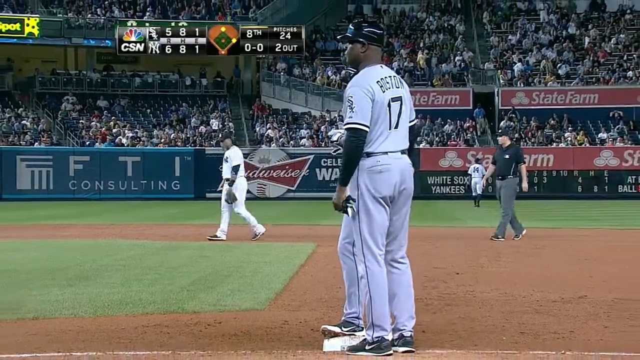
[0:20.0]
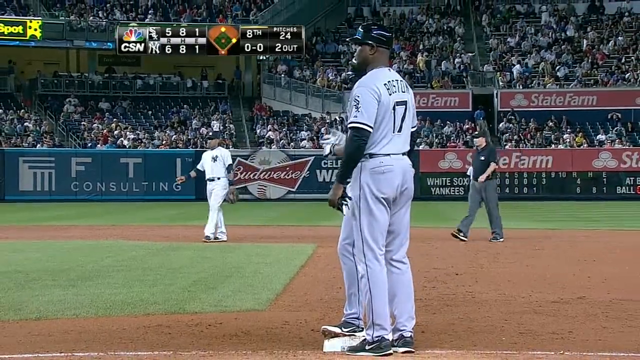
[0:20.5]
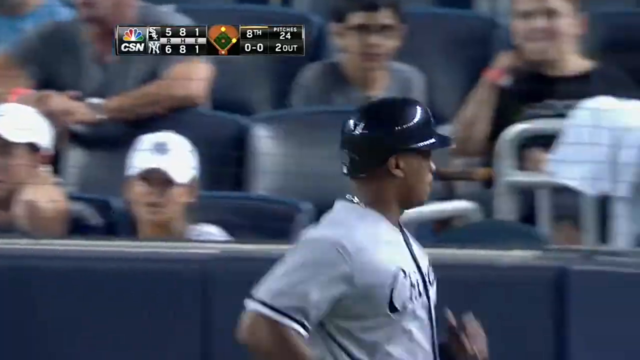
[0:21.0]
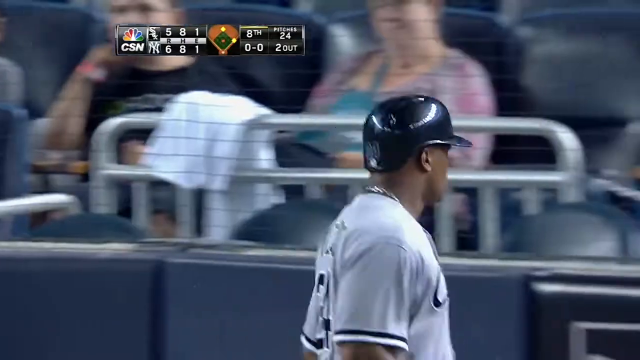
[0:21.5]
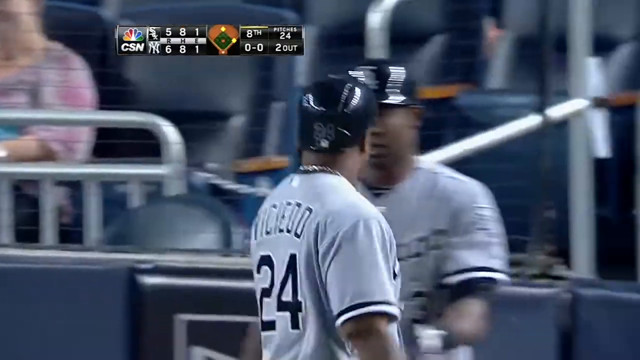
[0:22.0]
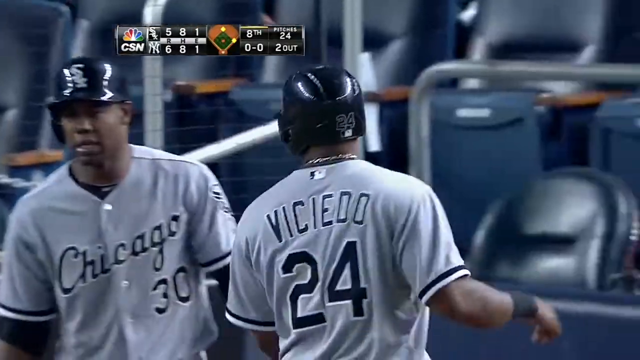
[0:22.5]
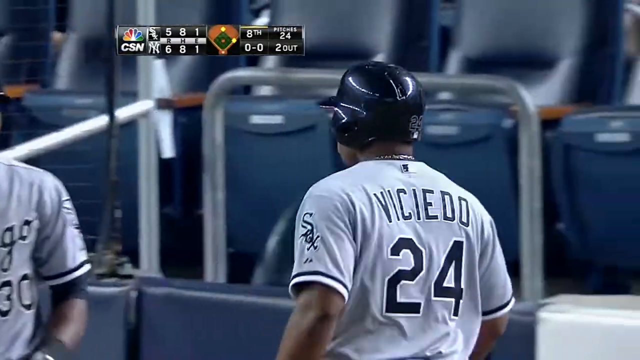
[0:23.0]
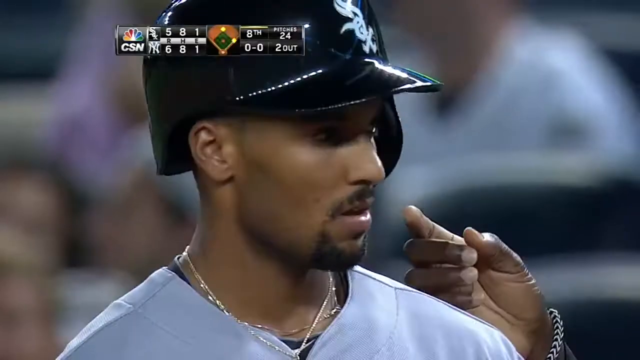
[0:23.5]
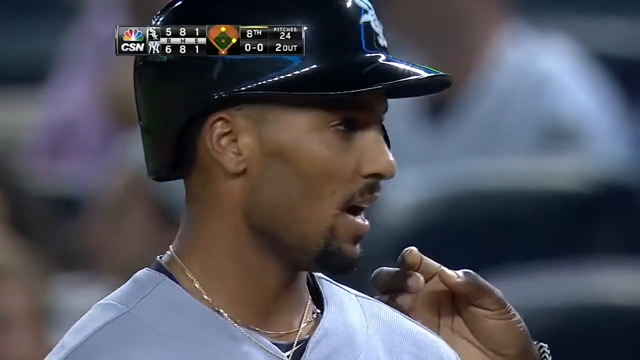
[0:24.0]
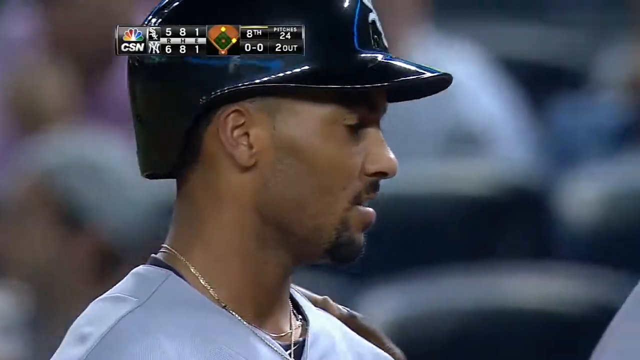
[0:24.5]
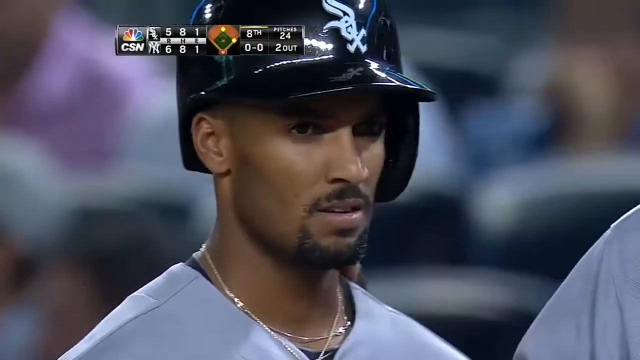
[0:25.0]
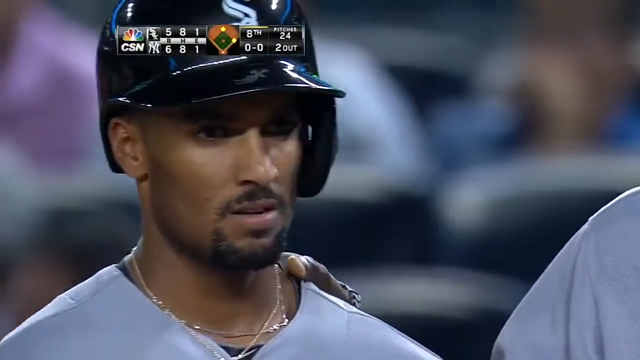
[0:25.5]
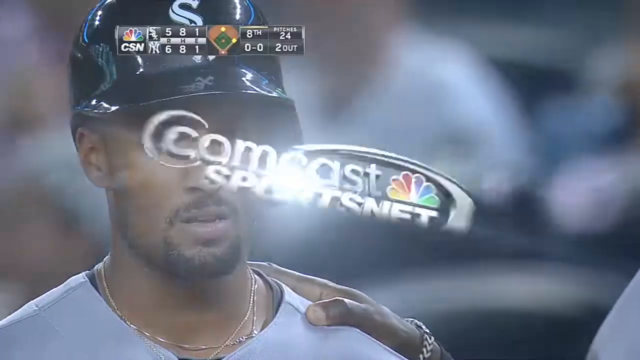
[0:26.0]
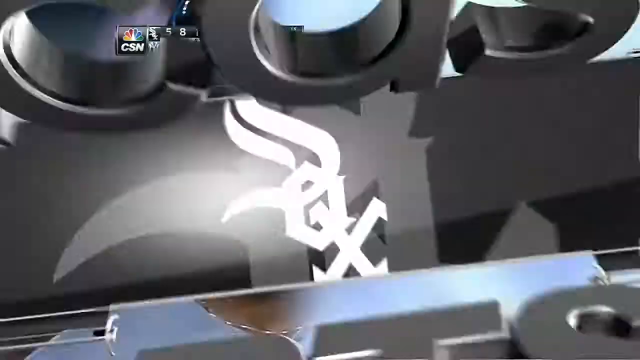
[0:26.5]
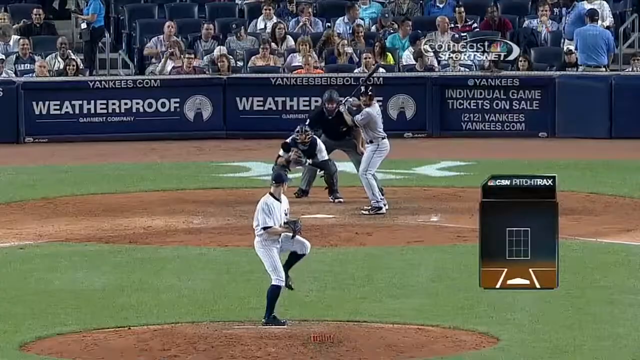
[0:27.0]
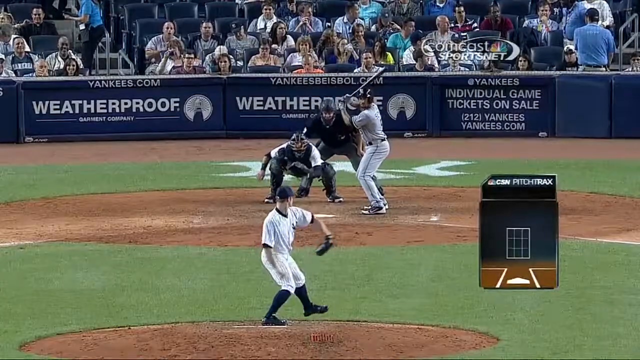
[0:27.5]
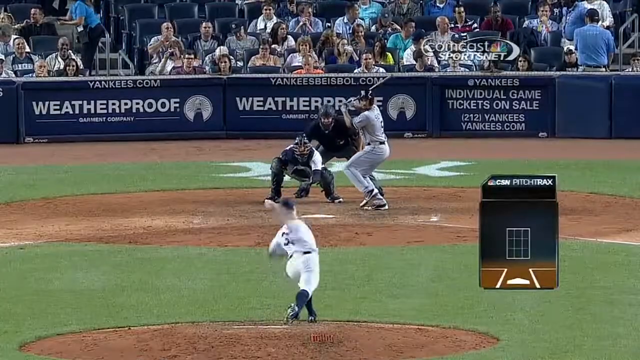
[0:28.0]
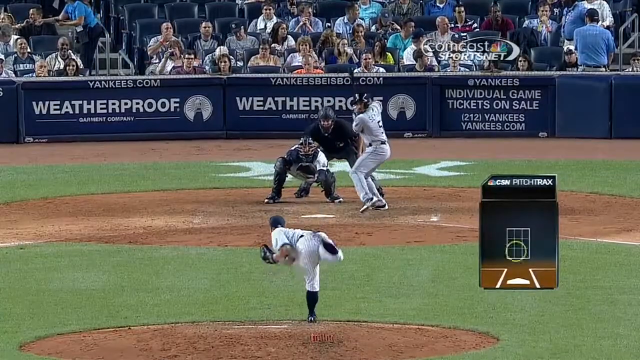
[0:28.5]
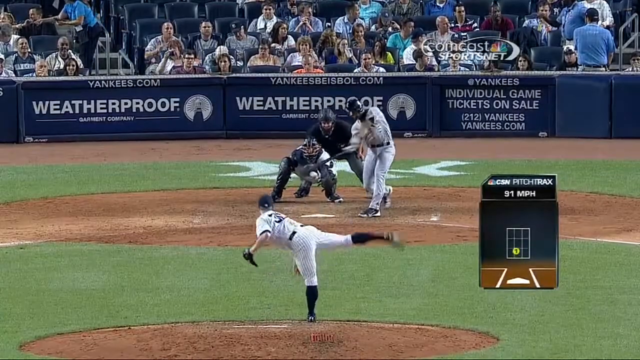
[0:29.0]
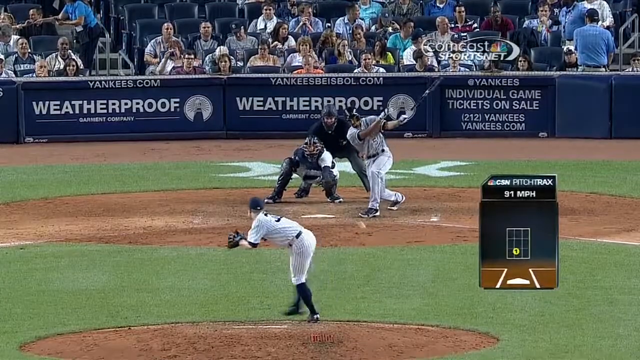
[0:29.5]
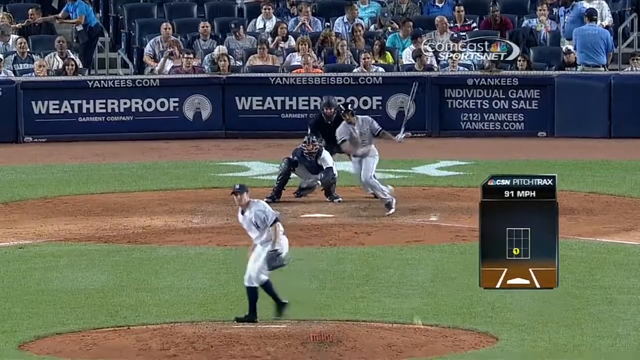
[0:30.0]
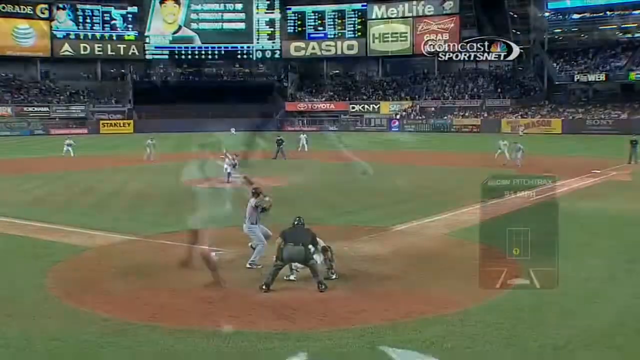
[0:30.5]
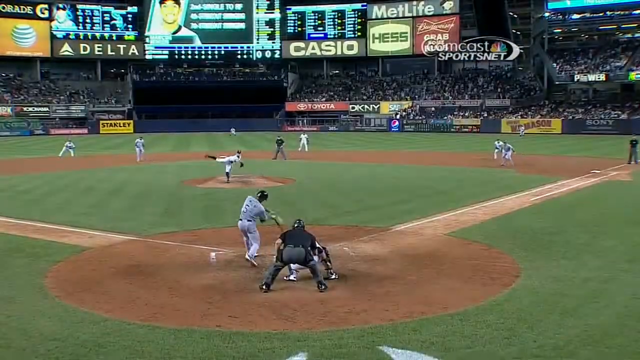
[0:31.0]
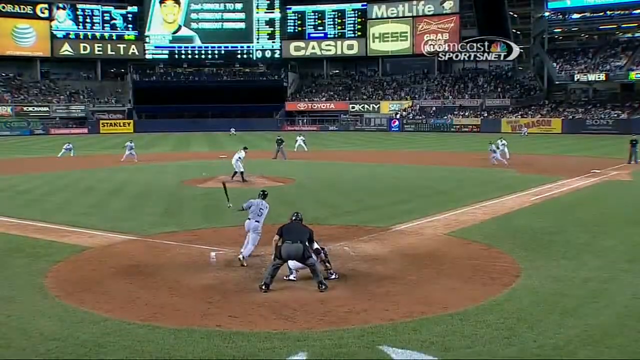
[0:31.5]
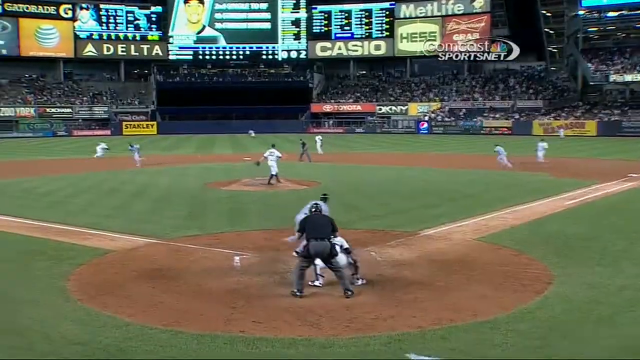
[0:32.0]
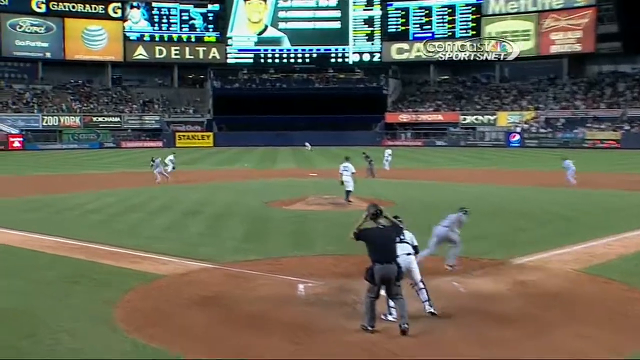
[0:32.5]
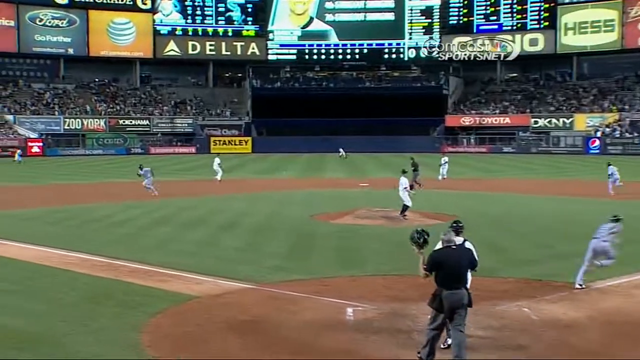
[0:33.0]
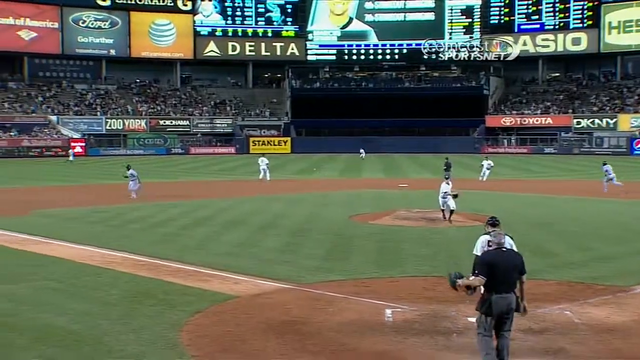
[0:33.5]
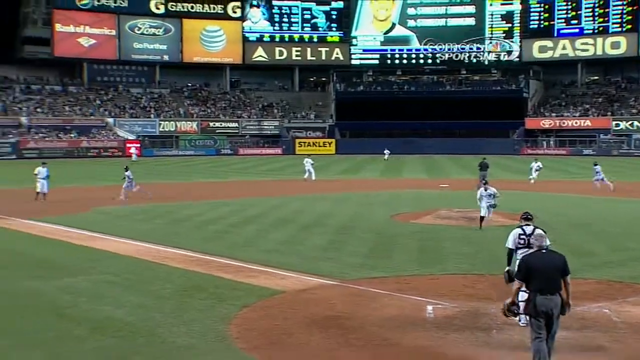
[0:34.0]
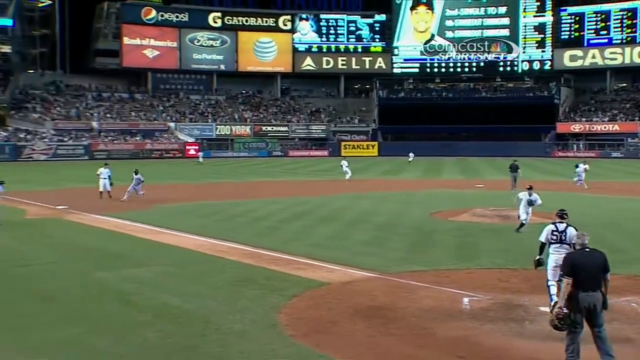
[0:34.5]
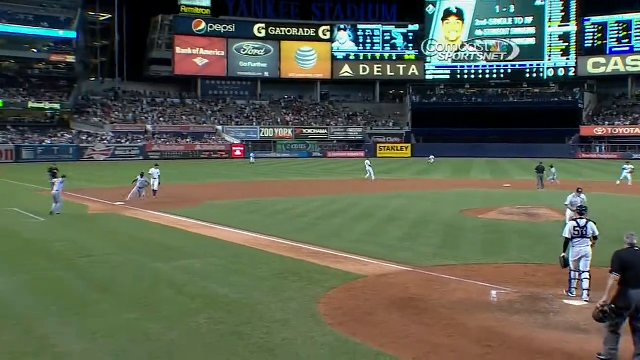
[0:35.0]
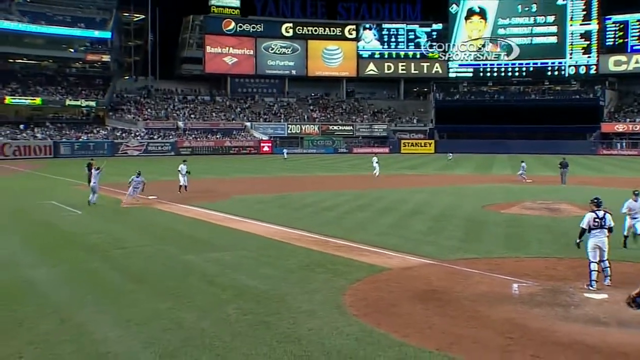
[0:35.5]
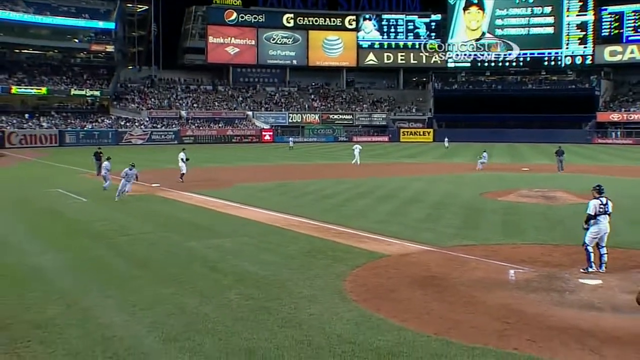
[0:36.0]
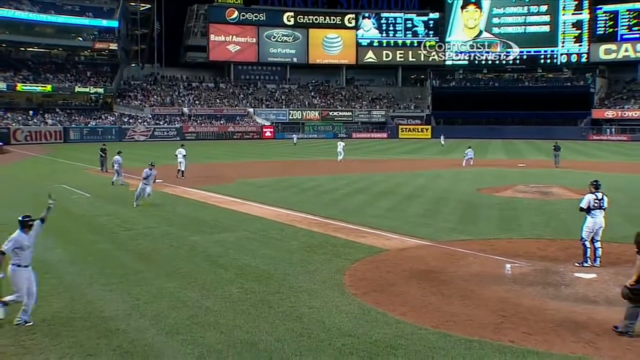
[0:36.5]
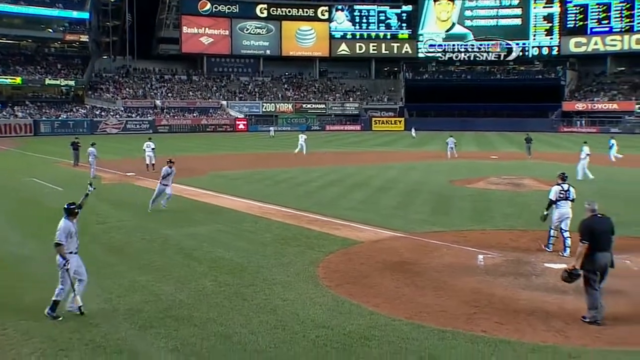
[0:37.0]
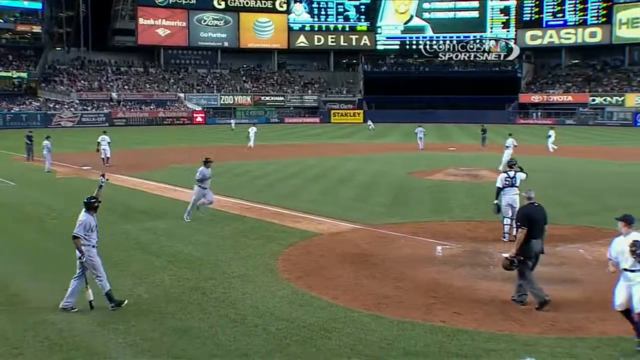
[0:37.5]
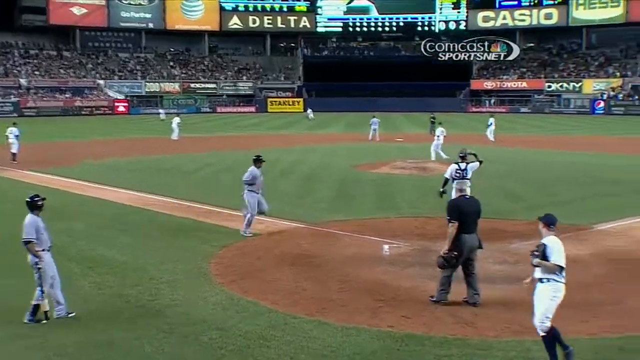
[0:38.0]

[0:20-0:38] The baseball game continues. In the upper left corner is the scoreboard. It reads "CSN", possibly CBS Sports Network, next to a small rainbow-coloured peacock symbol, followed by "SOXO" for the Chicago Sox and the New York Yankees. Column headings that look like "R H A B I" are shown, with "6-8-1" for the Yankees and "5-8-1" for the other team. The graphic shows the eighth inning with two out. A player named "Viciedo", number 24, is shown, and the play is then shown again in slow motion: as the ball is hit he starts to run and makes it home, then starts walking slowly. He is not out.